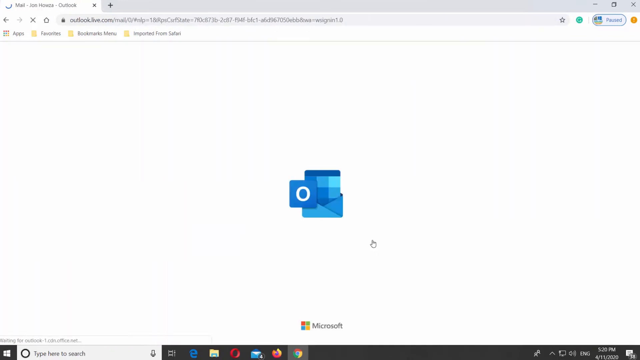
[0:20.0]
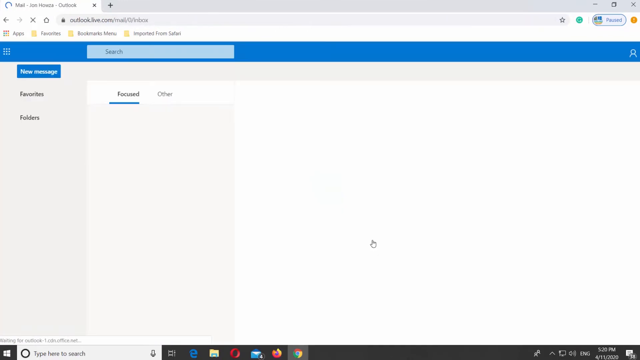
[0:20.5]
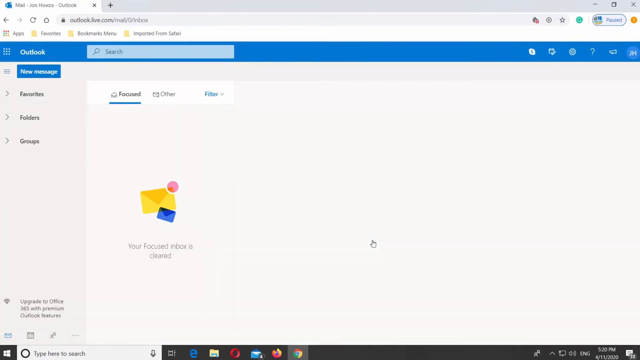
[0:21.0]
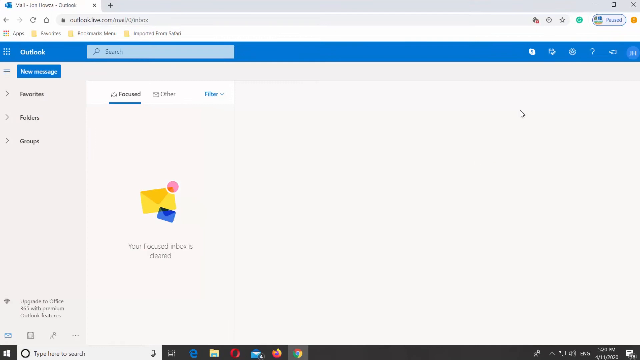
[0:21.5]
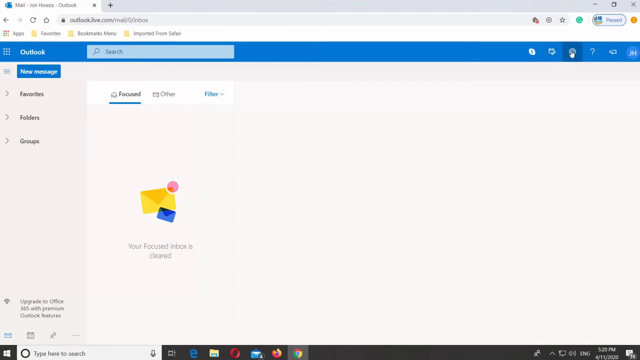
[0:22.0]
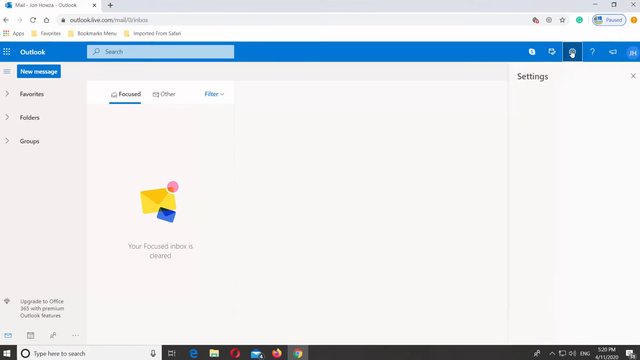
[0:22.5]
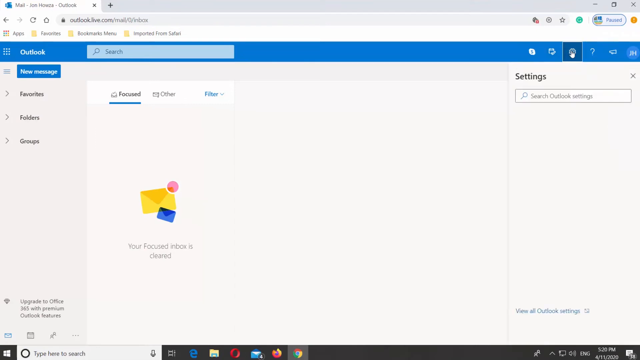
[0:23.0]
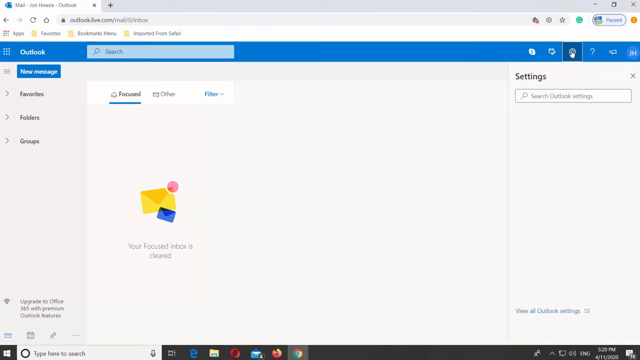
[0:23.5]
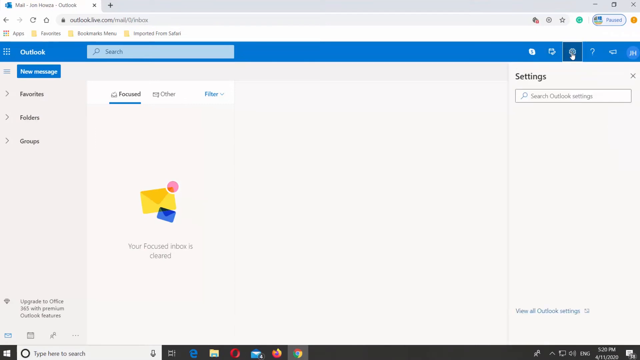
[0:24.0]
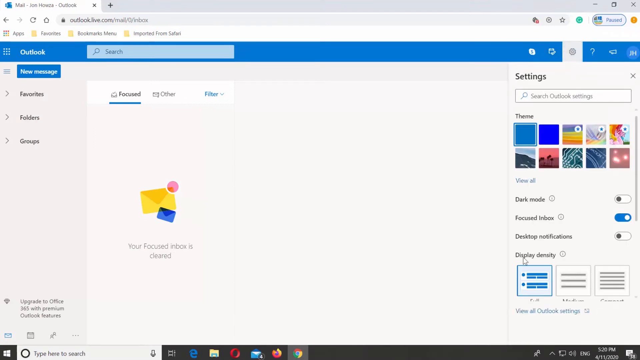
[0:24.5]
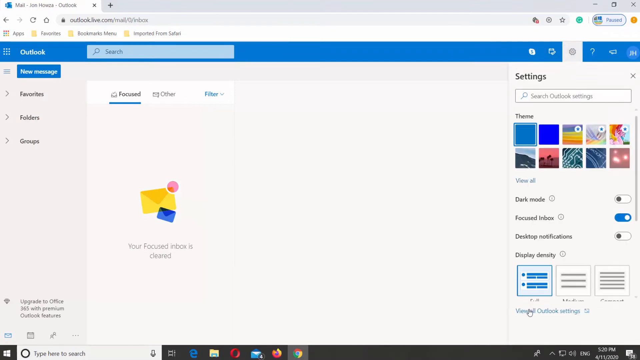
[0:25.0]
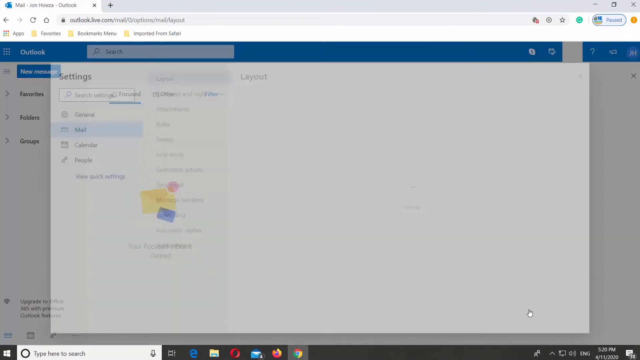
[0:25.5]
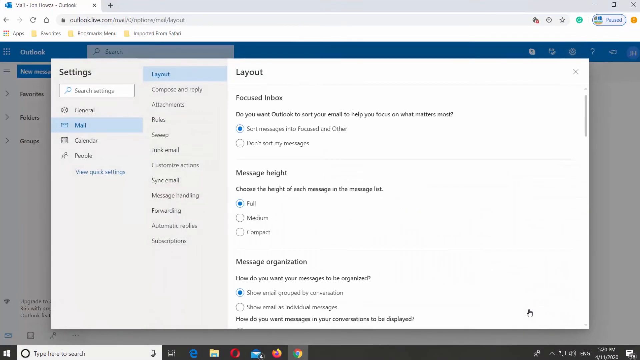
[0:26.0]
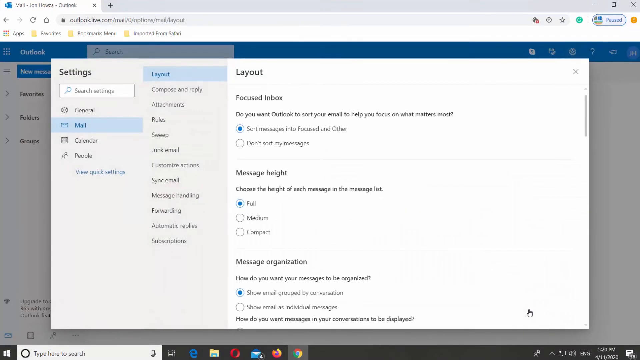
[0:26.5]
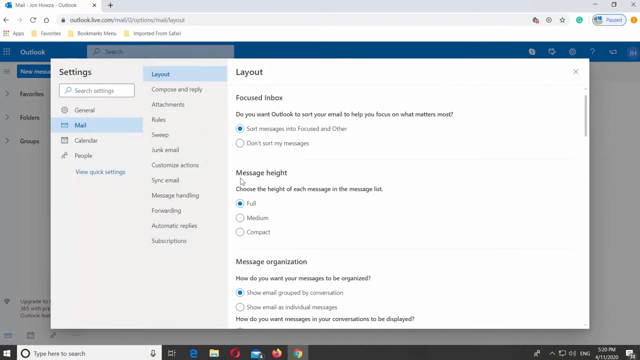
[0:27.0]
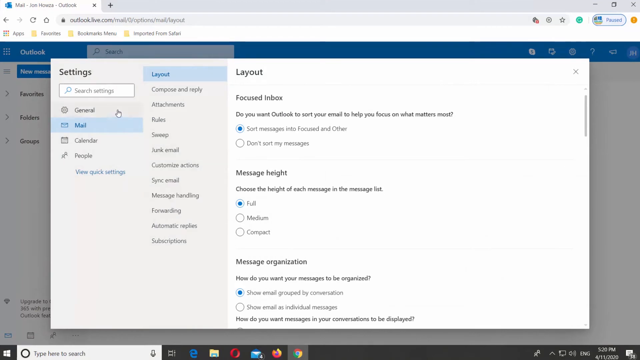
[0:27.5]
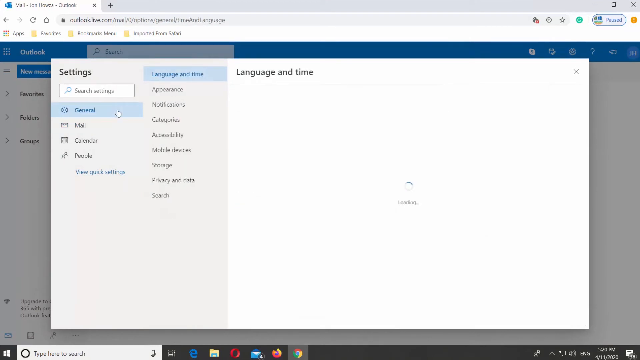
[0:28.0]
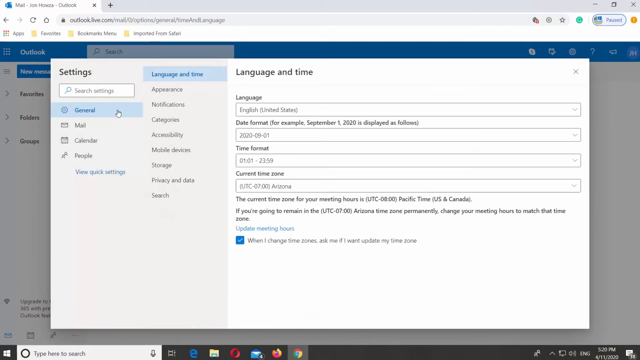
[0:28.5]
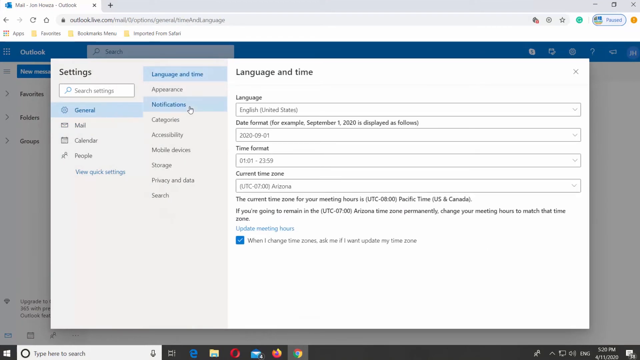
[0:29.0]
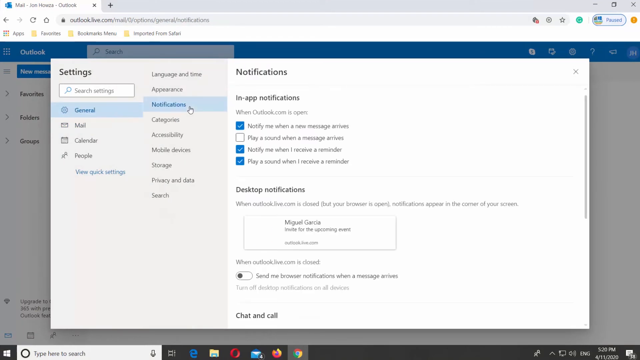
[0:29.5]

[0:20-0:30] The video appears to be a rundown of how to use Outlook, highlighting particular features of the platform, and the screen seems to show it being done on a desktop or laptop. The first feature shown is new messages. From there it switches to the settings, which are automatically open on mail. The cursor then turns to the general settings and clicks on notifications, showing what the notifications section holds, with options for things like language preferences and sound.